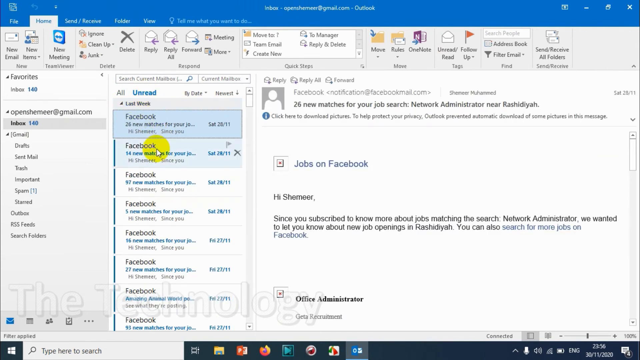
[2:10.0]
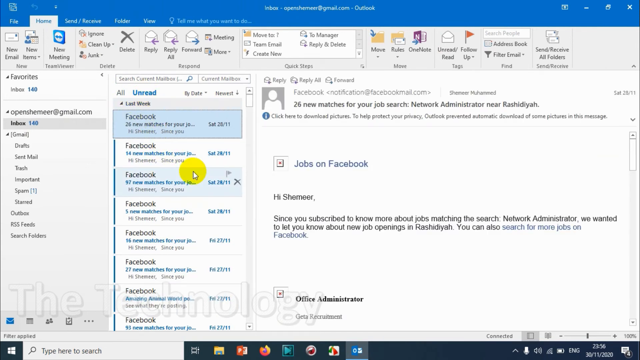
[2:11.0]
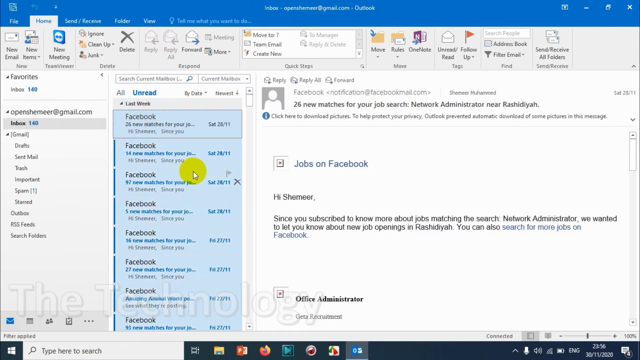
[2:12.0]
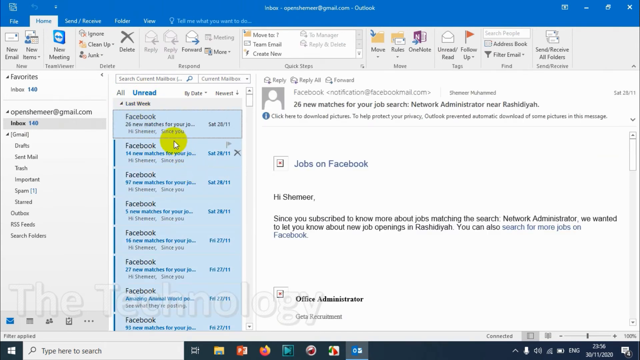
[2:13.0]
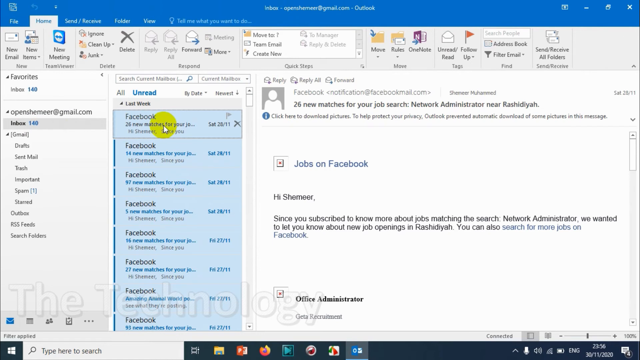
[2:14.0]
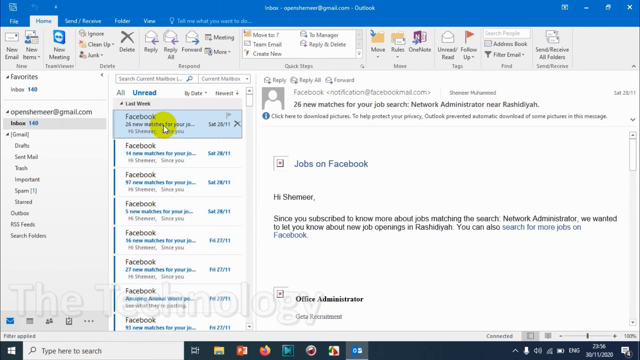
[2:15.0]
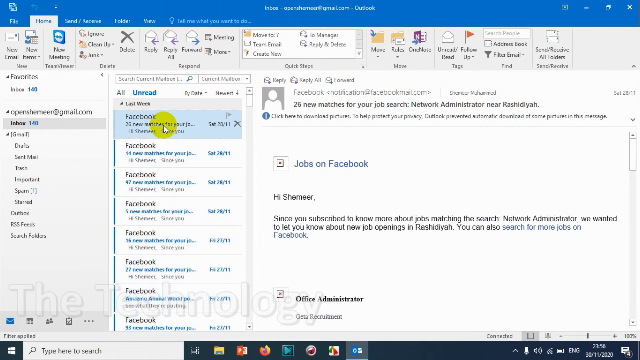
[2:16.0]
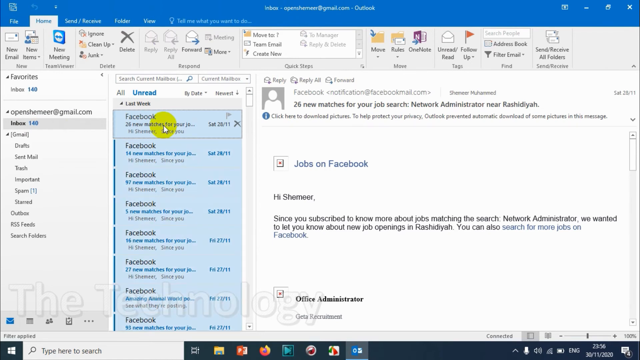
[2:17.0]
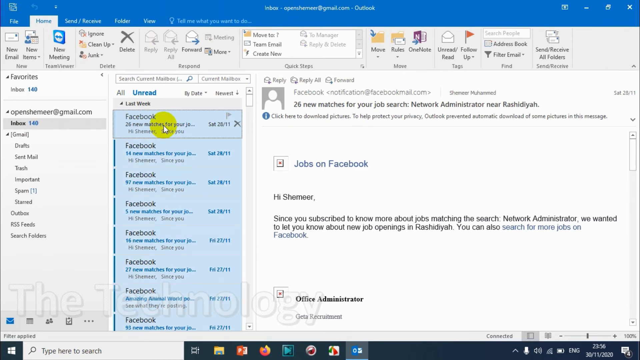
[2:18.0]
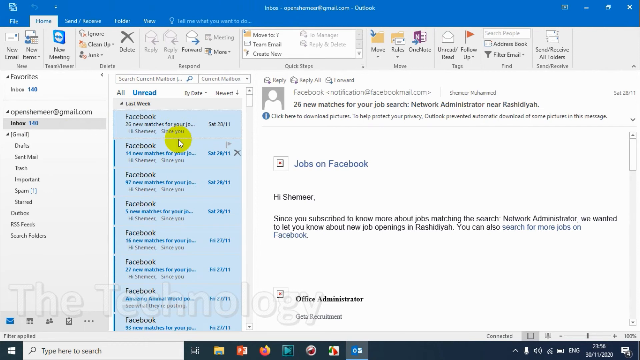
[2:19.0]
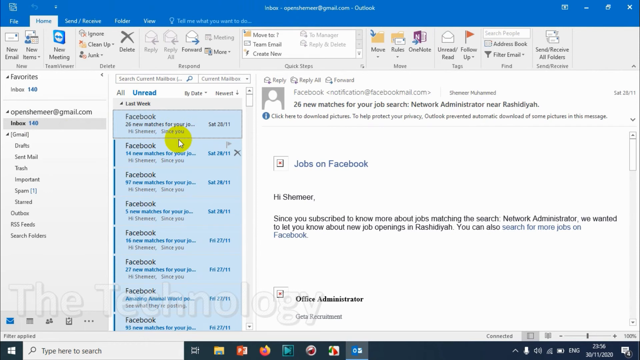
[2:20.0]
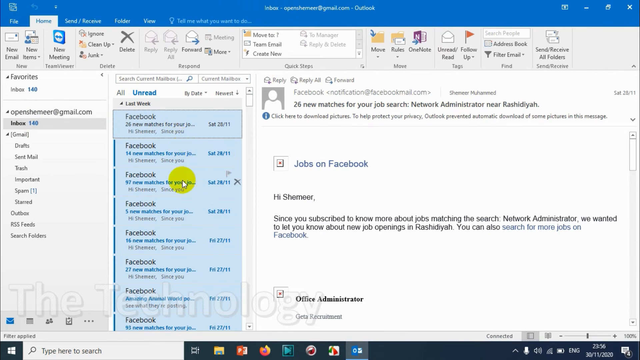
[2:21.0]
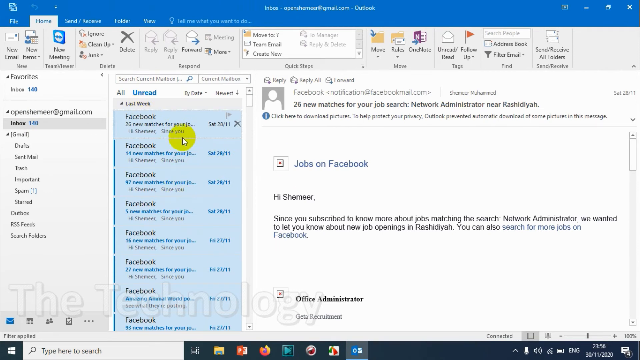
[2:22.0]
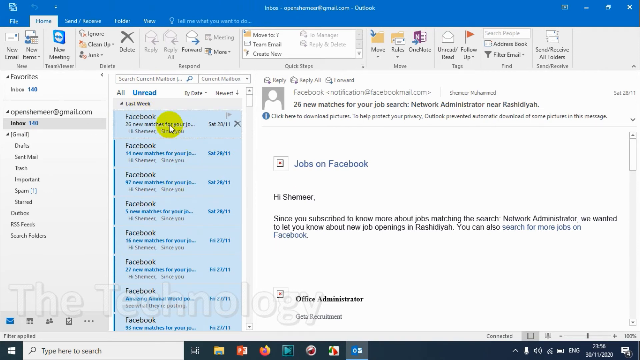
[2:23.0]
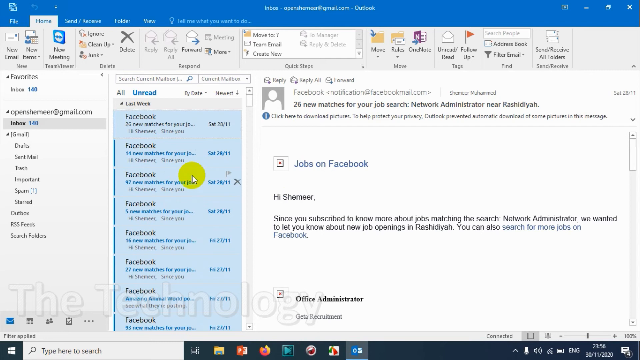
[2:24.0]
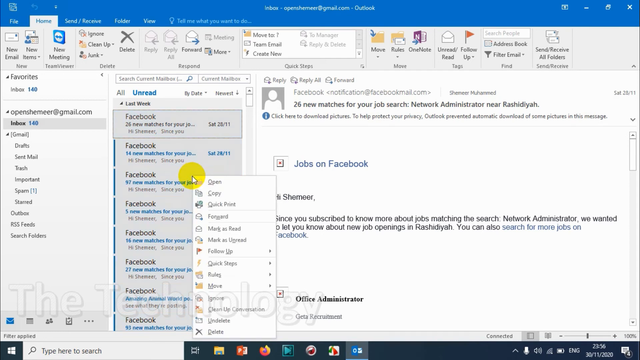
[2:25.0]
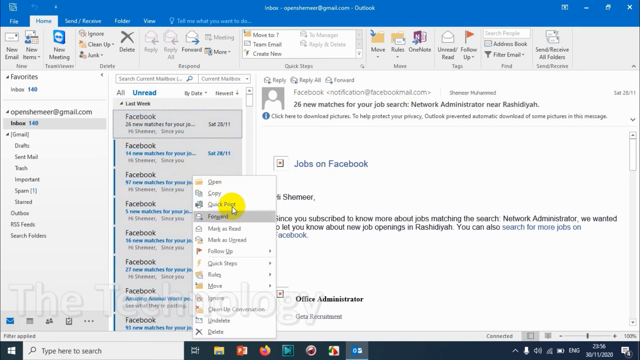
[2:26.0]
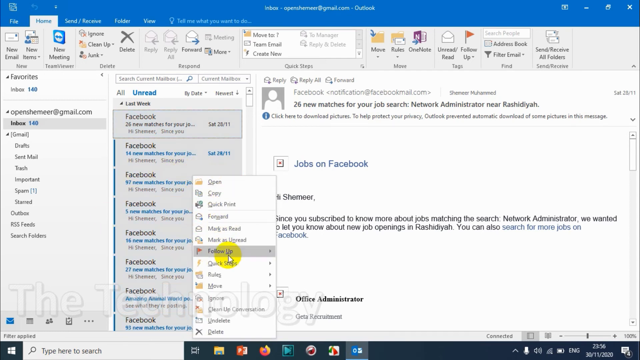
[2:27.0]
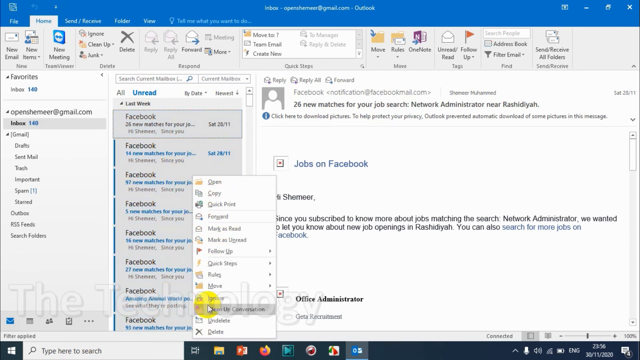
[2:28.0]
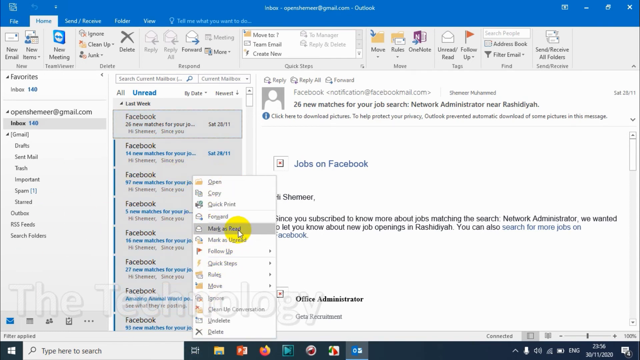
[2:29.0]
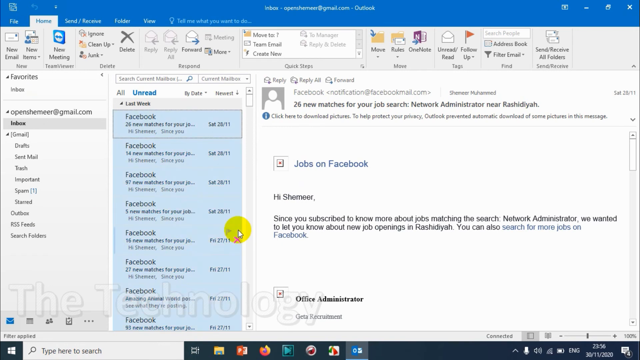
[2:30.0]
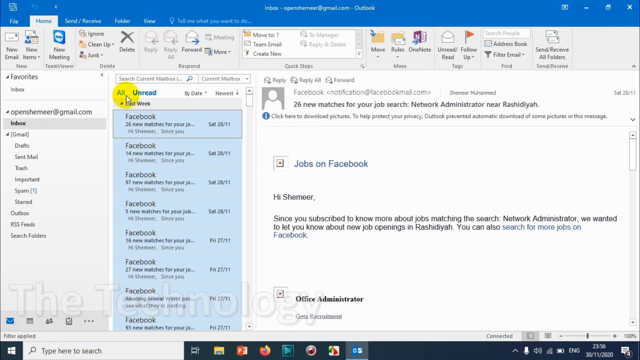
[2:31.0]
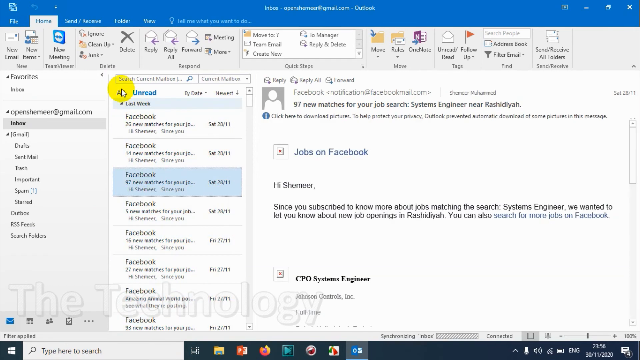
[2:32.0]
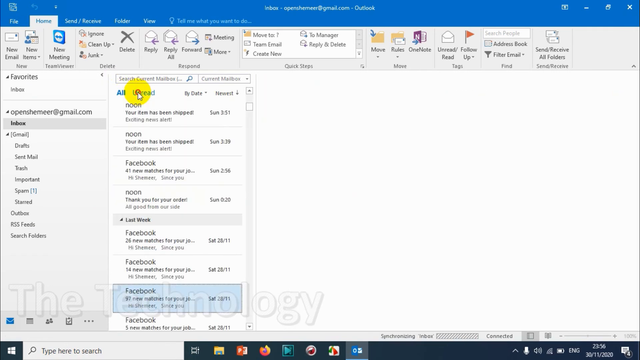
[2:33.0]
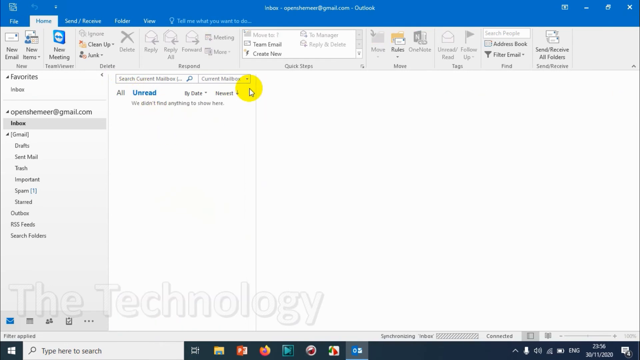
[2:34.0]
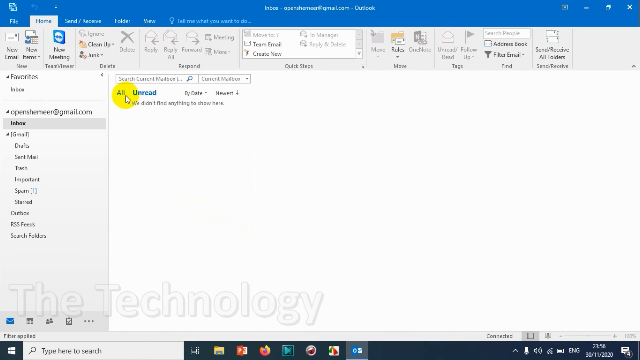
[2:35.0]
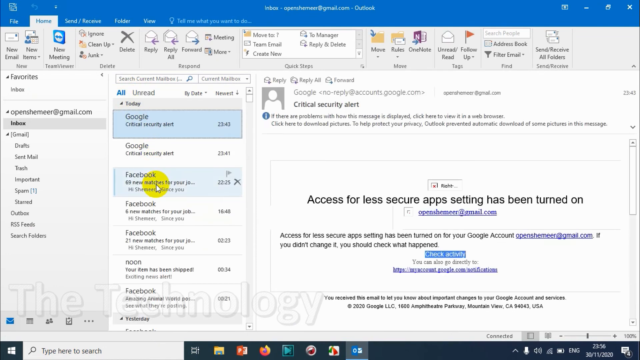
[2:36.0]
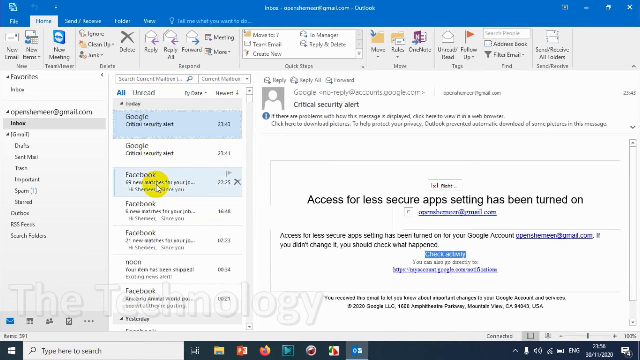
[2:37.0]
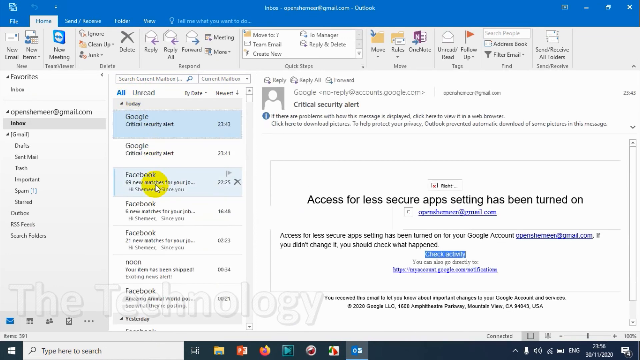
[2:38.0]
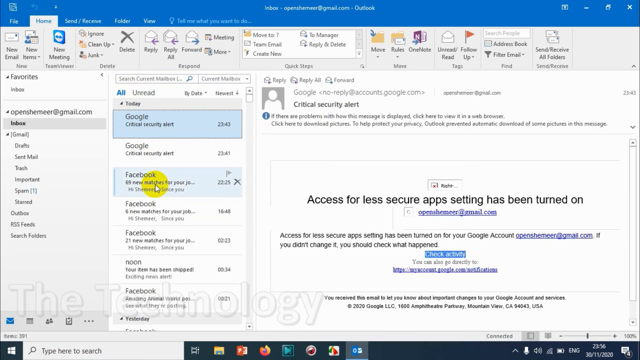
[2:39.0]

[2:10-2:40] A page looks like the landing page of an application with a blue strip at the top and an X at the far top right for exiting. A bar at the top has "File," "Home," "Send," and "Receive," with Home selected, showing an open Gmail account. On the far left are email categories such as Inbox, selected in gray, Drafts, Sent Mail, and Trash. The center column contains unread messages; the first message, Facebook, is highlighted in a very light blue. The mouse pointer, apparently represented by a yellow circle, hovers between the selected email and the second email in the column. On the far right is a preview of the first email, which reads "Jobs on Facebook."